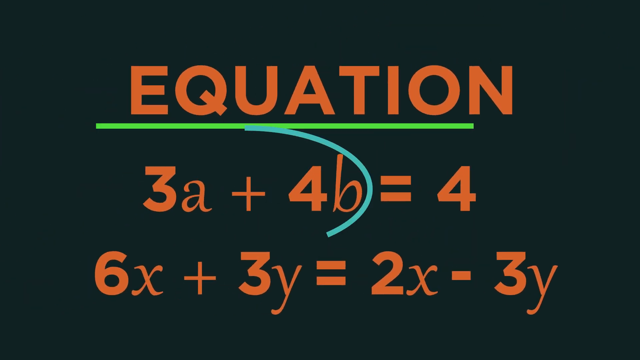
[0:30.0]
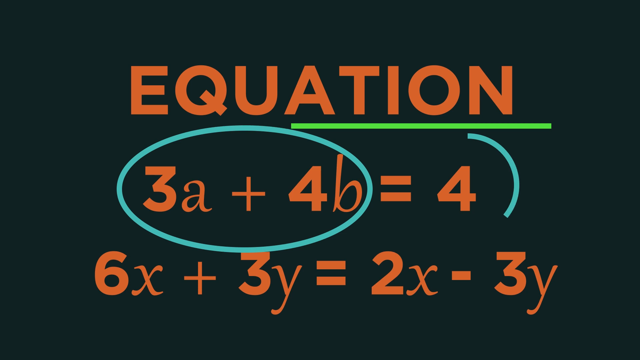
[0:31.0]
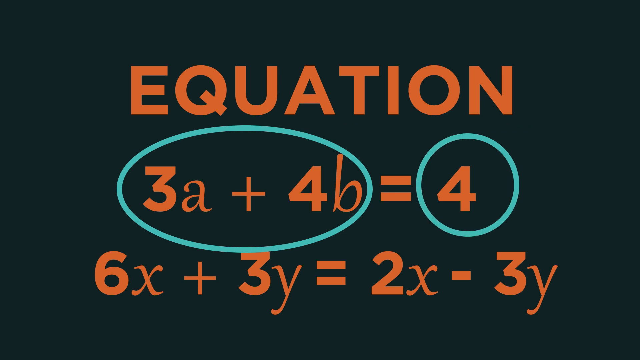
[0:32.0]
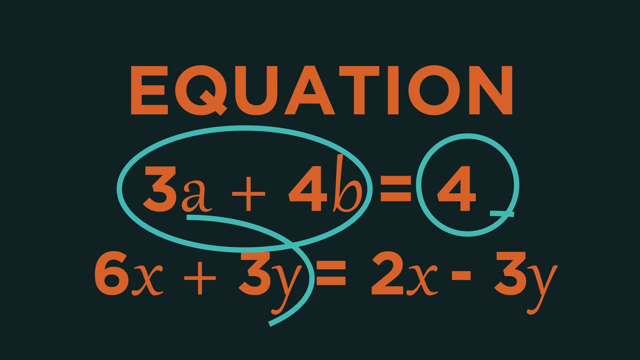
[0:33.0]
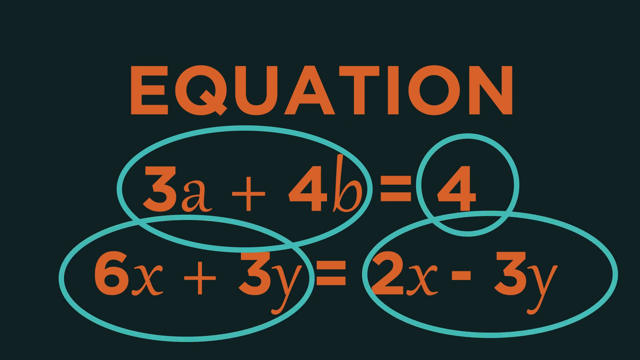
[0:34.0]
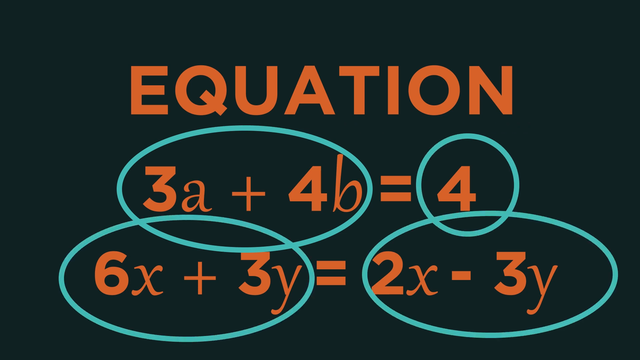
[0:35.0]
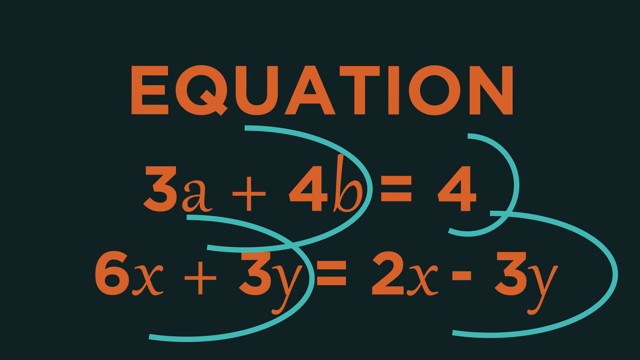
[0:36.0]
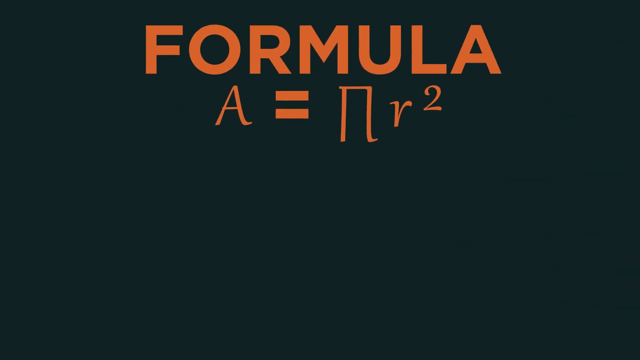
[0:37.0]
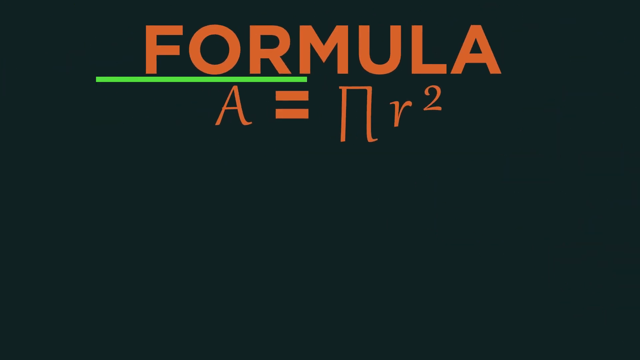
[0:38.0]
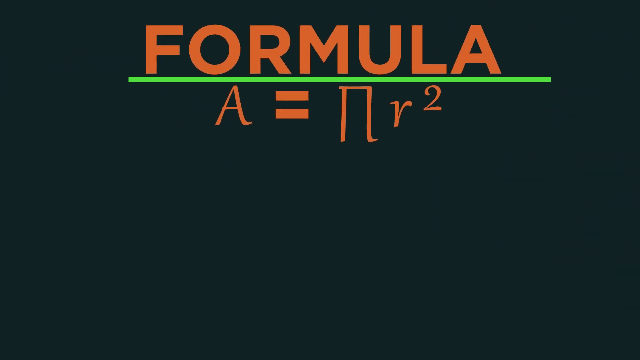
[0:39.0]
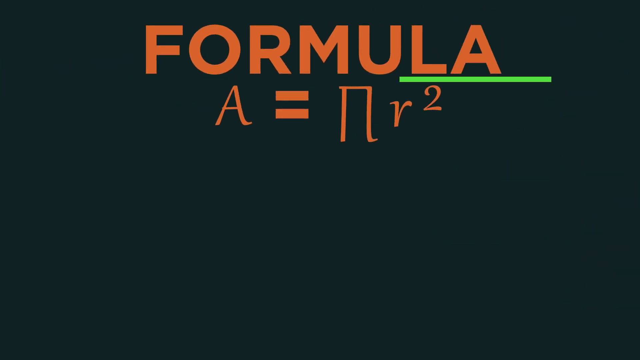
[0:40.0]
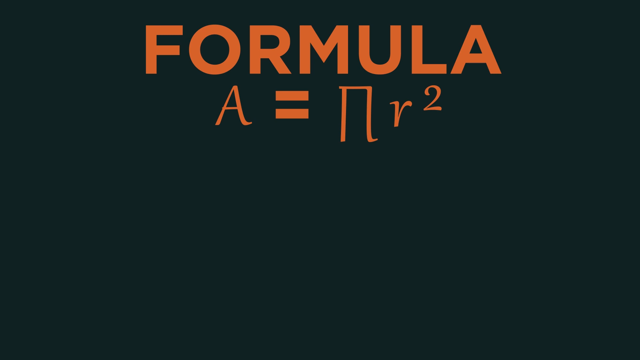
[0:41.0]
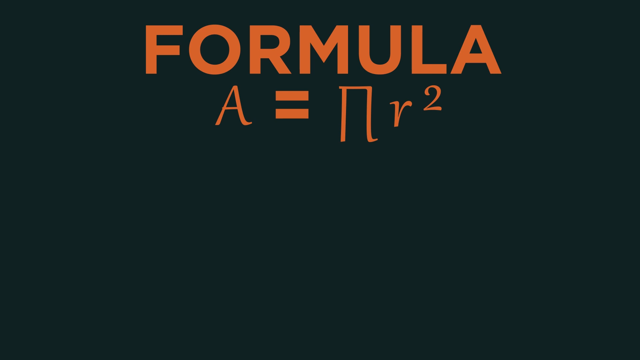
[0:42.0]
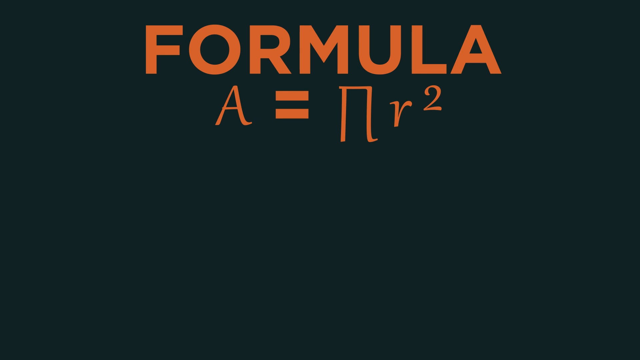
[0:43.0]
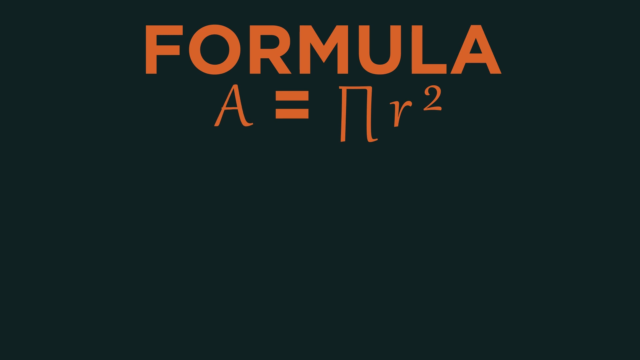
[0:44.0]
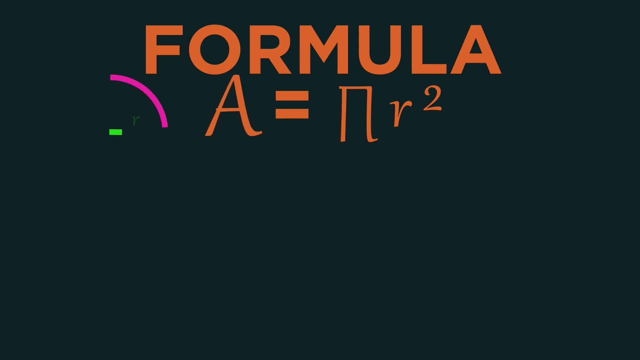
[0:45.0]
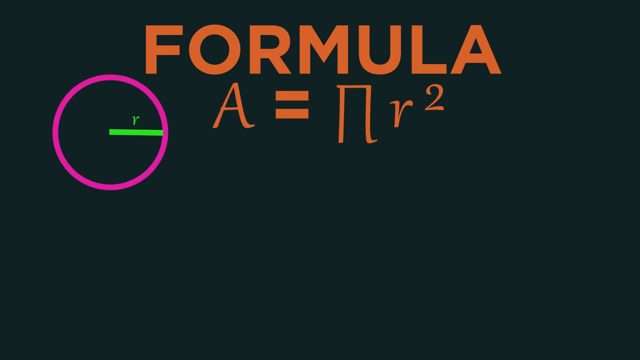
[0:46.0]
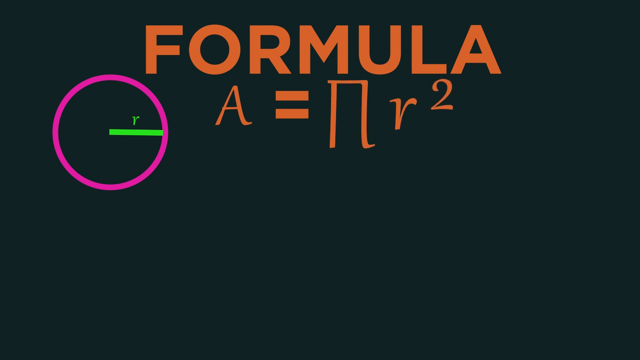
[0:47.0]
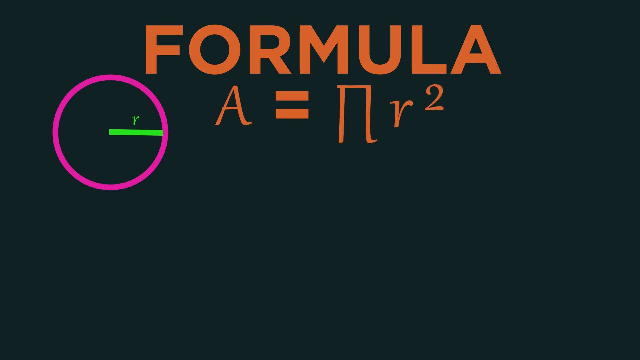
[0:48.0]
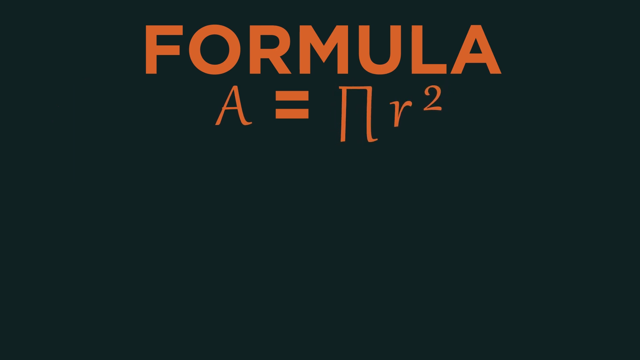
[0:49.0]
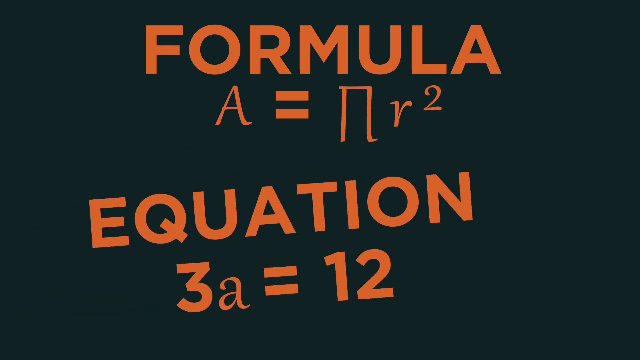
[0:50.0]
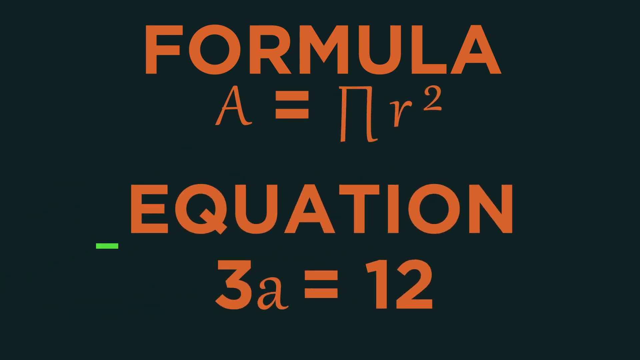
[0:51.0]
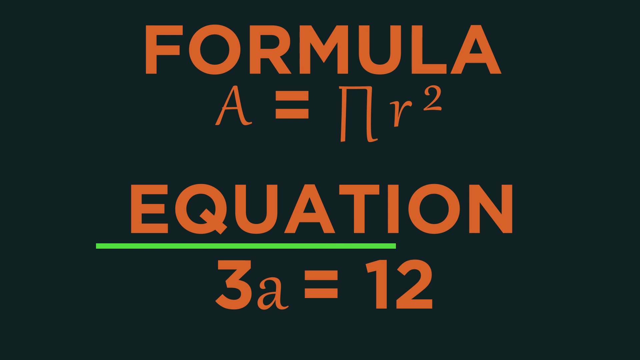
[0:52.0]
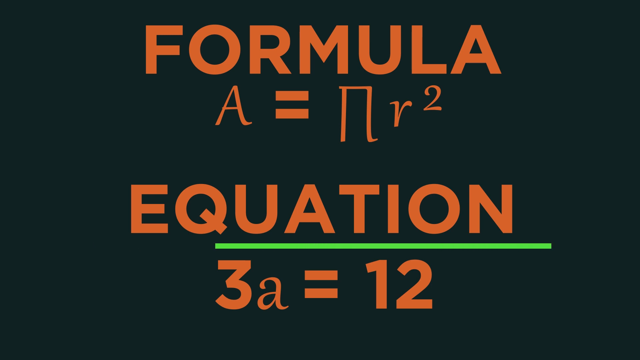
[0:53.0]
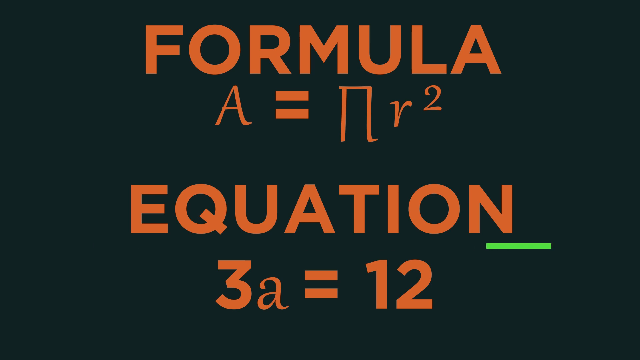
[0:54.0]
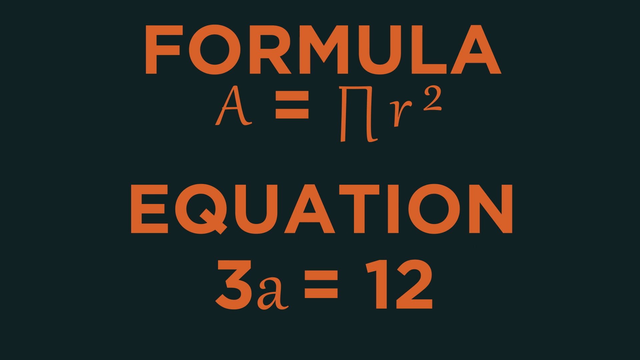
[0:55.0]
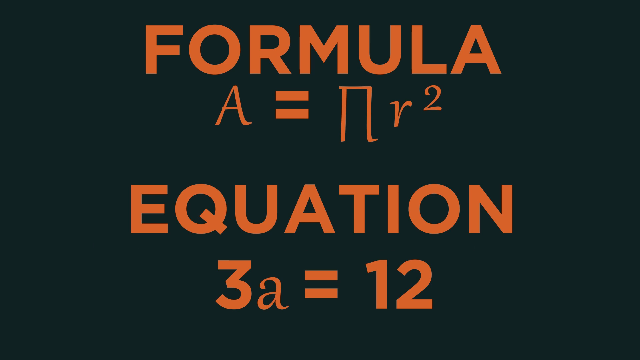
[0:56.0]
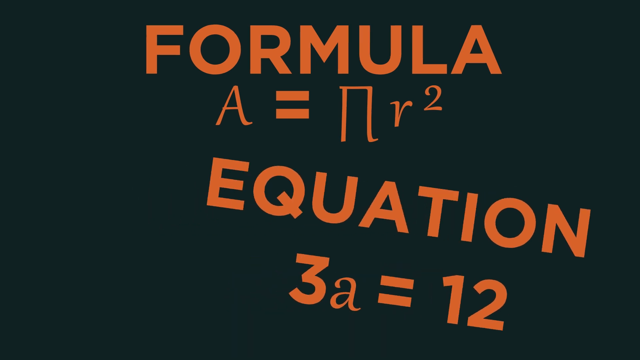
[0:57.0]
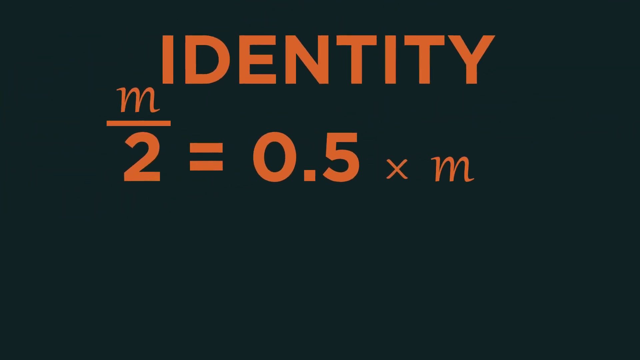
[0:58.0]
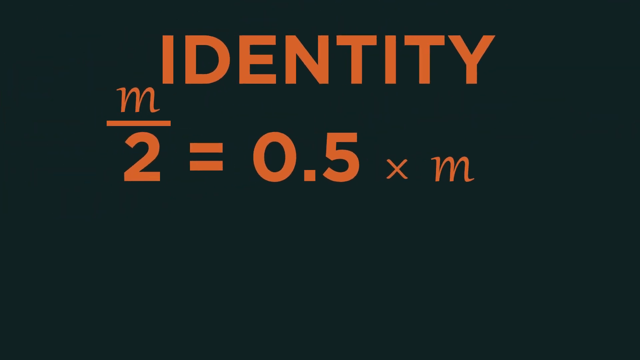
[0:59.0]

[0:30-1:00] On a solid black screen with all text in orange, "equation" is shown with "3a plus 4b equals 4" and "6x plus 3y equals 2x minus 3y", and each of these equations is circled in green. "Formula" appears with a green underline animating to the right, followed by "a equals pi r squared" in orange. A pink circle circles some green text on the left, and below, "3a equals 12" pops up in orange under the formula. "m over 2" also appears. Parts of the equations are circled in turquoise.